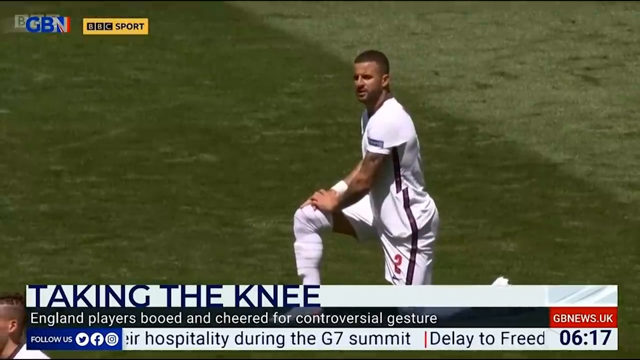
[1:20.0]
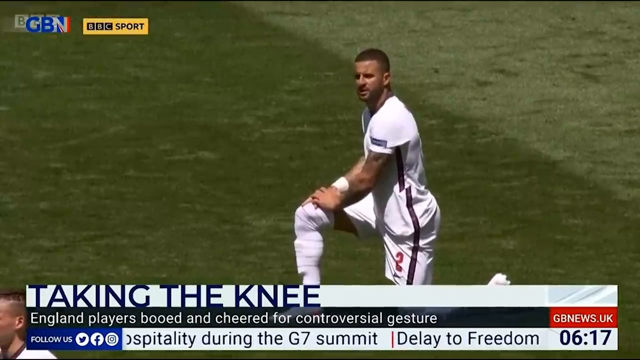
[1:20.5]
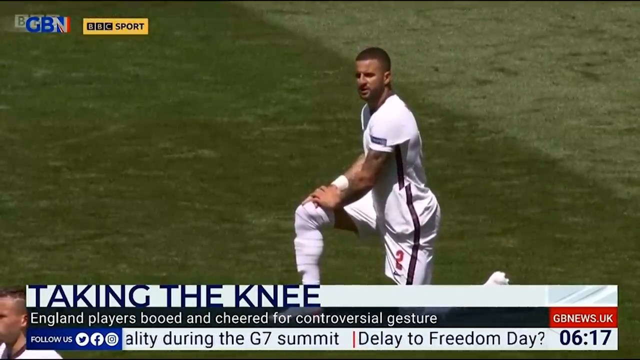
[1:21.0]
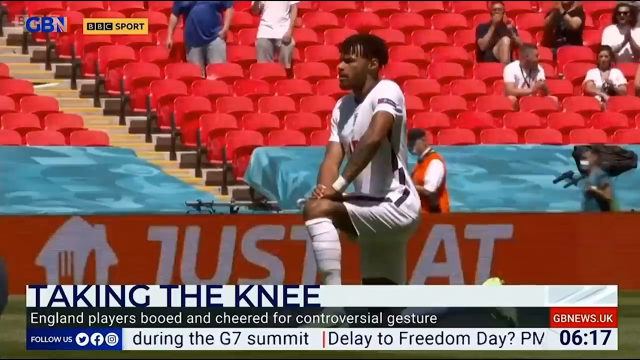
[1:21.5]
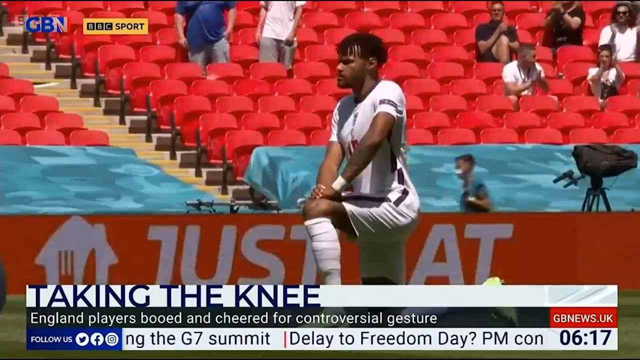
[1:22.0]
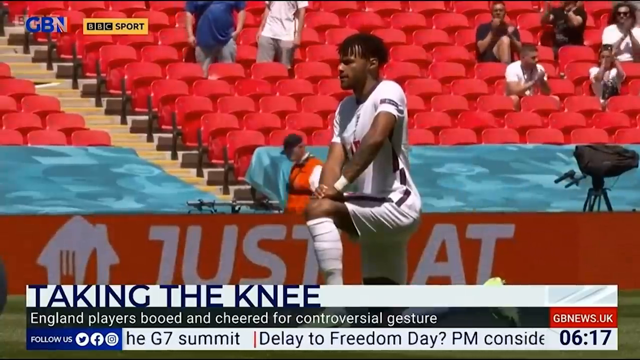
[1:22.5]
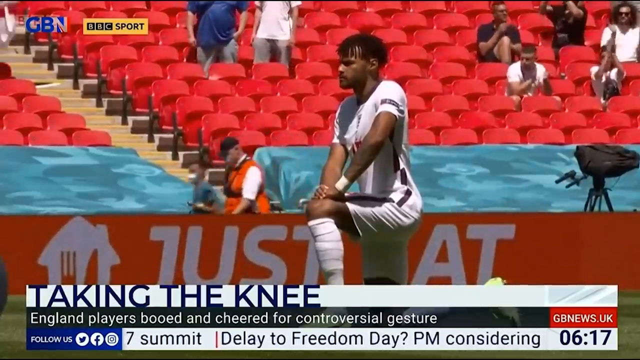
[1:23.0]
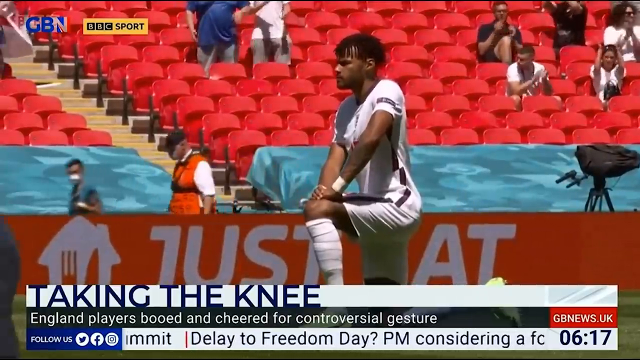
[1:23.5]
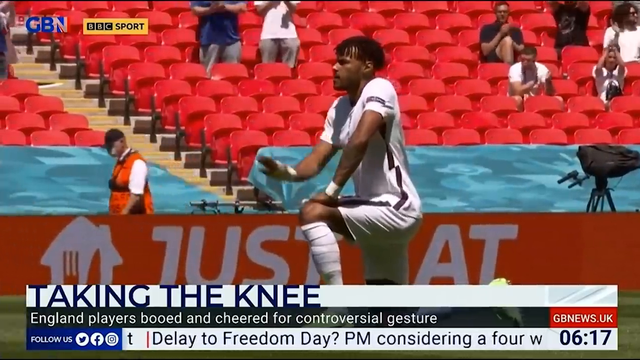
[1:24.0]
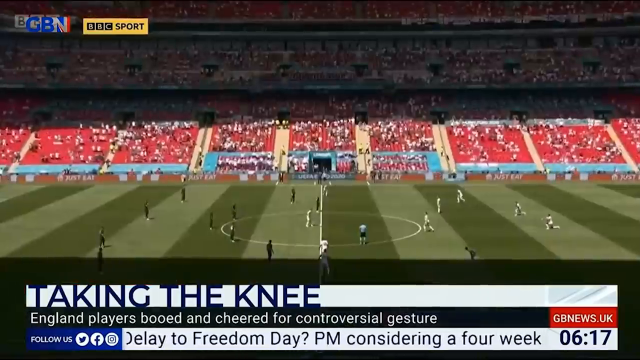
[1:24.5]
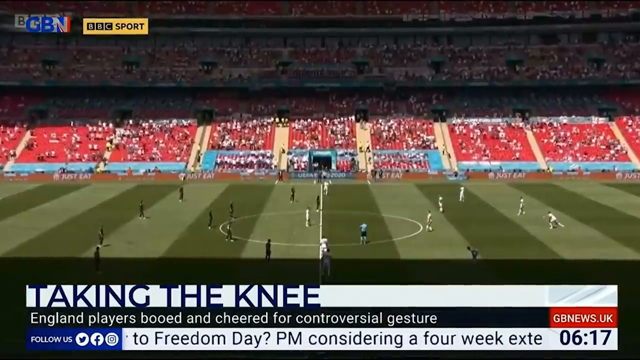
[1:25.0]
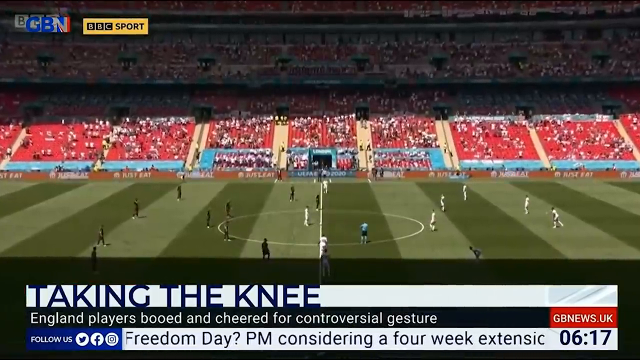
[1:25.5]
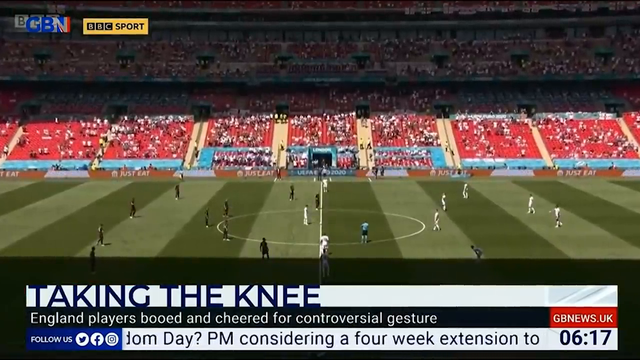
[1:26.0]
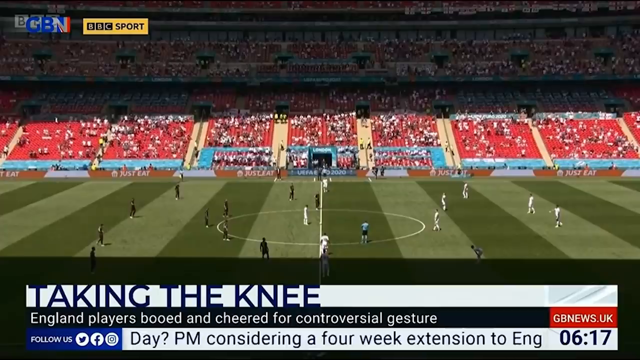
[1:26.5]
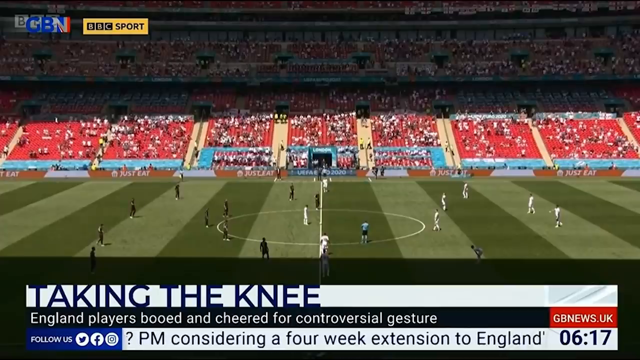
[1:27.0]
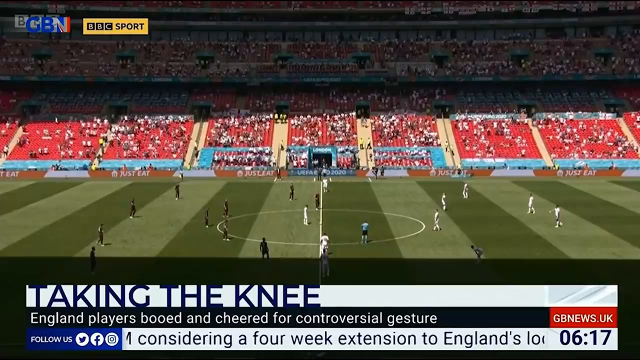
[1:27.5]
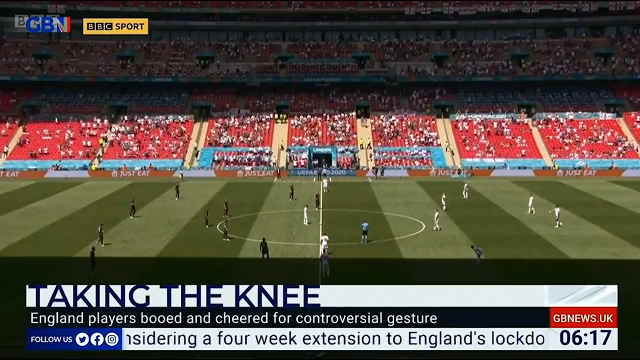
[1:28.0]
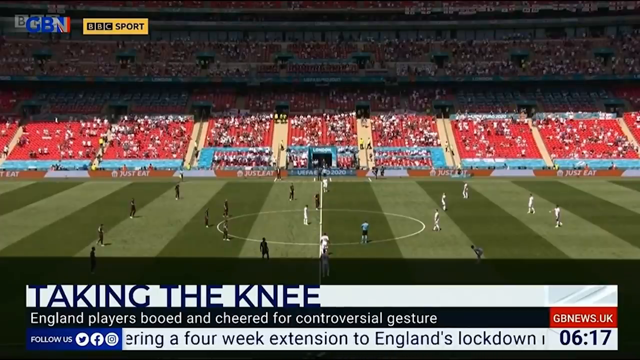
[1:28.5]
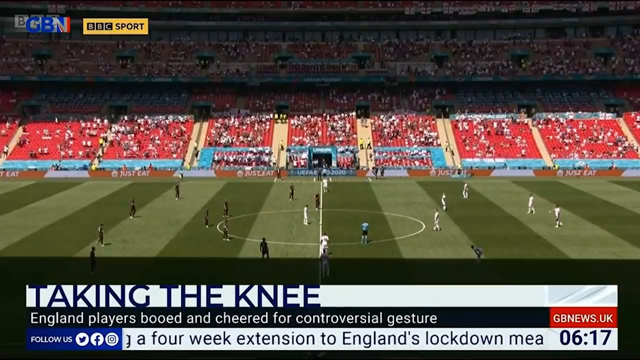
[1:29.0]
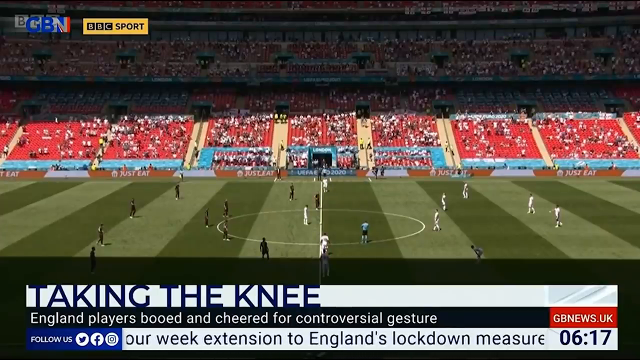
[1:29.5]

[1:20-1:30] A soccer player kneels on the field with one knee up and both hands on that knee, sort of looking almost at the camera; his other knee is on the ground. At the bottom of the screen the text reads "taking the knee," and below it "England players booed and cheered for controversial gesture." The camera is kind of shaky. Another player is shown doing the same thing, but with his hands around his left knee and his right knee down on the ground. Behind them, players in the stands in red seats are clapping. A soccer player raises his right arm and reaches in front of him. Then a player is shown walking on the field, getting ready to play the game.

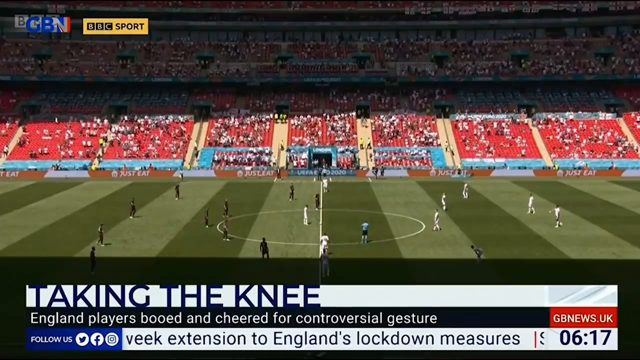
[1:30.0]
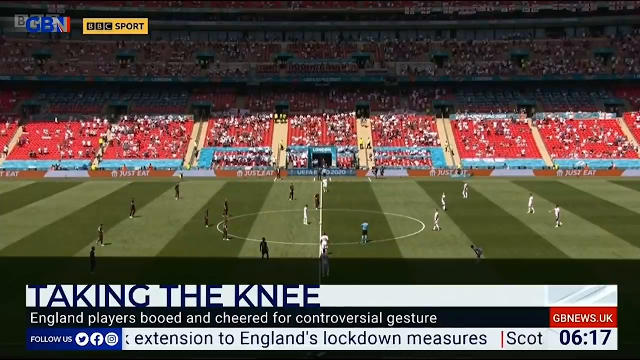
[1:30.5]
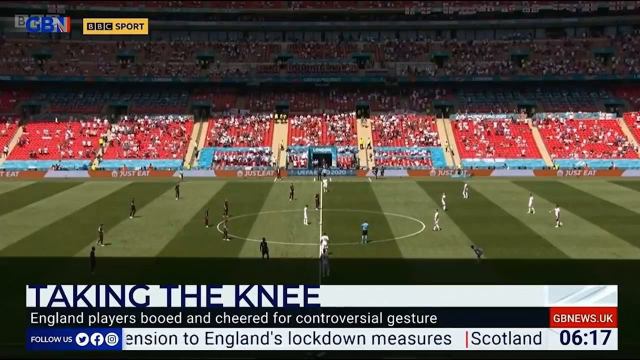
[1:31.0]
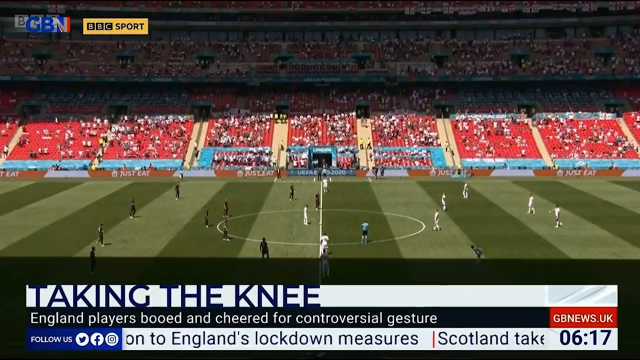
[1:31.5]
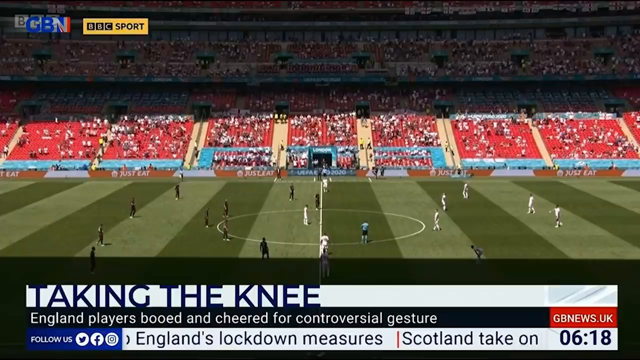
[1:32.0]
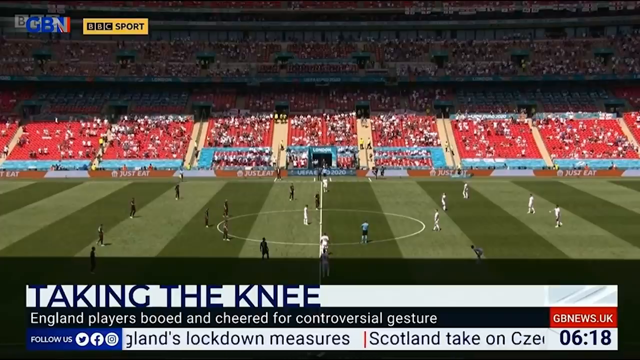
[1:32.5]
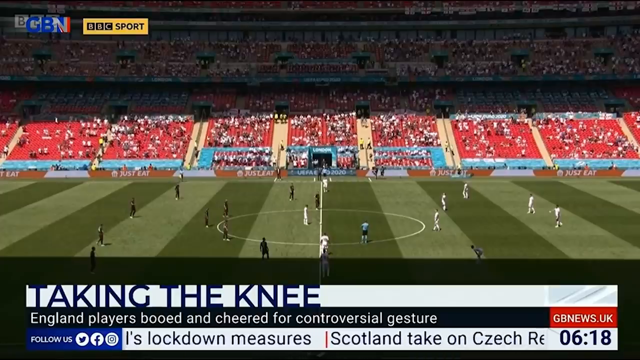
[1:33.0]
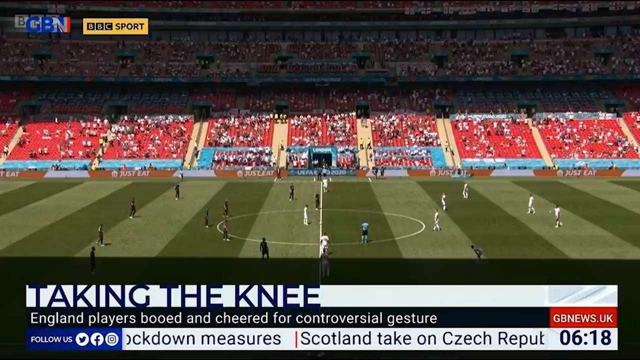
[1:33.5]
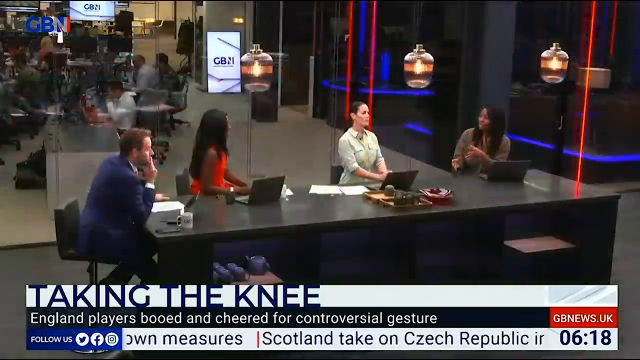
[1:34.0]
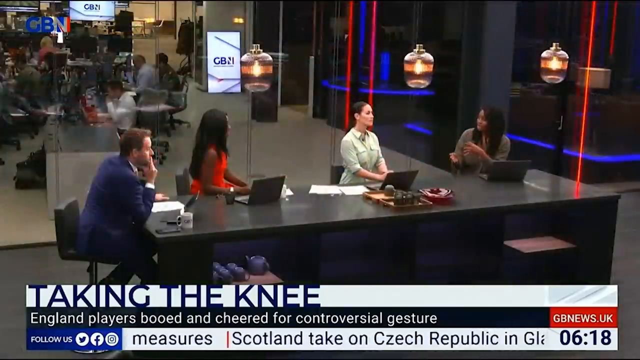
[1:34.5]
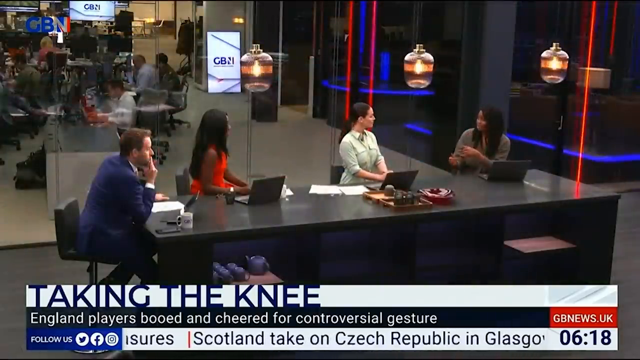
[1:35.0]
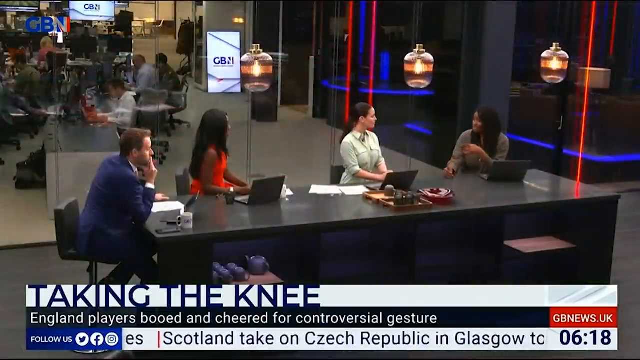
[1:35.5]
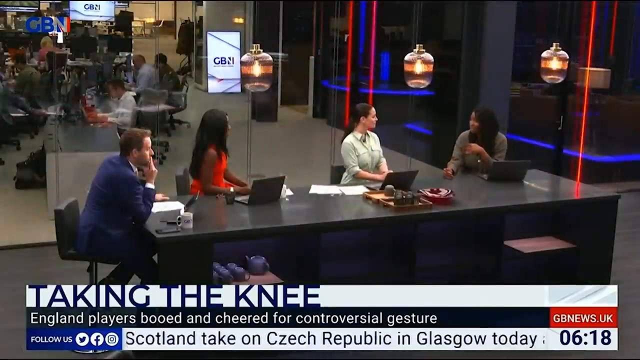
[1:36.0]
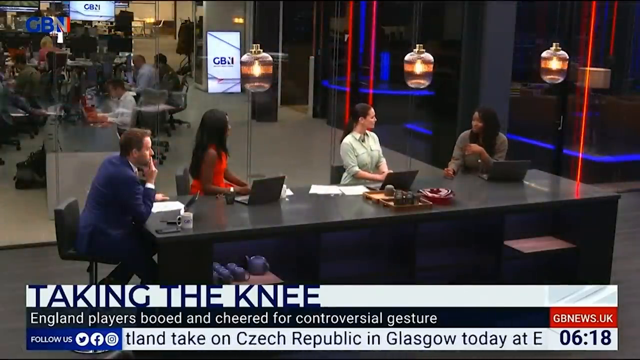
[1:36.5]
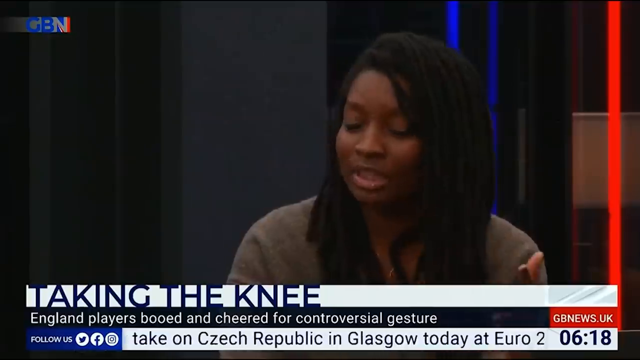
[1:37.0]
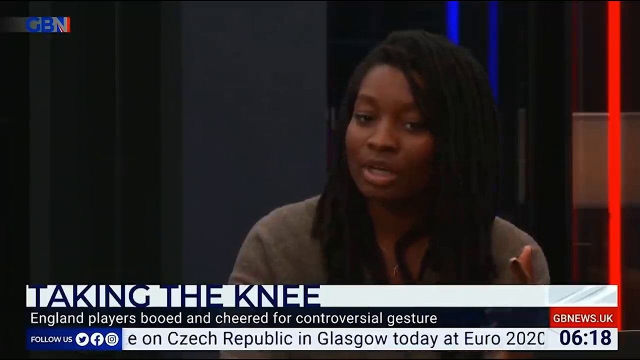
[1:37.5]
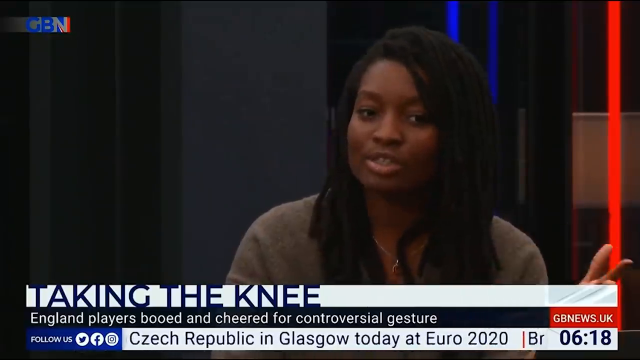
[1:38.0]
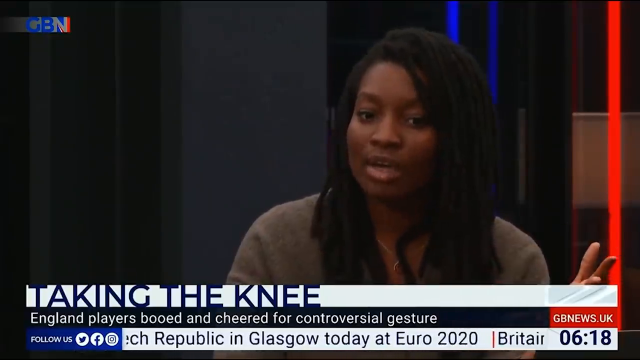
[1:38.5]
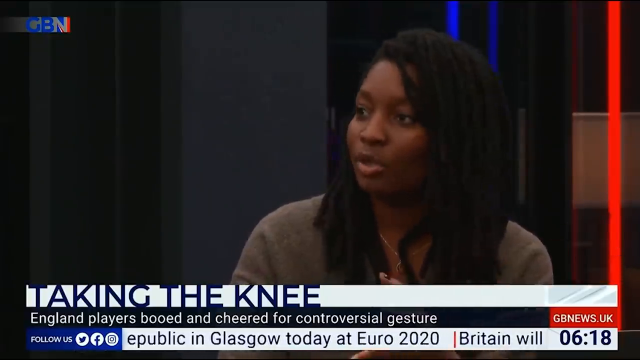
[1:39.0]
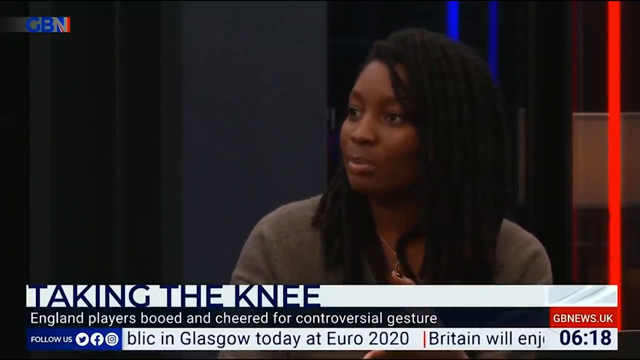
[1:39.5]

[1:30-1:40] An aerial view, sort of from the side, shows soccer players in a game: players in black uniforms on the left and in white uniforms on the right, with a couple of players standing in the middle. At the bottom of the screen the text reads "Taking the knee," with a line beginning "England players" below it, and words scroll across the bottom too fast to read. The view switches back to the people sitting around the table and zooms in on the black woman in the brown shirt. She holds her left hand up, fingers extended and palm facing the top of the screen, moves it toward the right side of the screen, then moves it back in front of her.